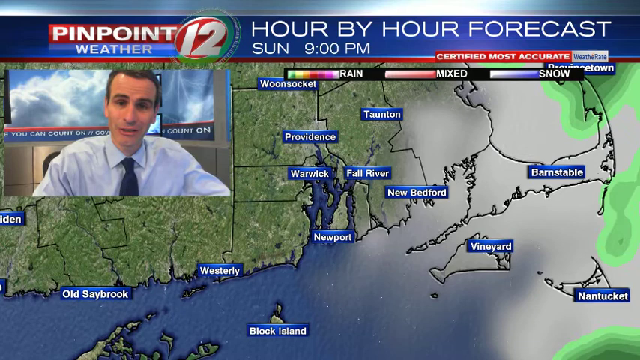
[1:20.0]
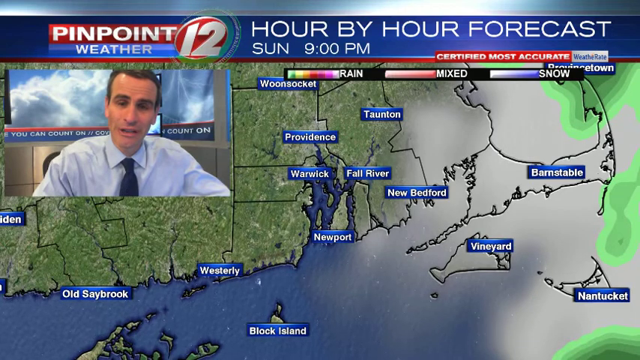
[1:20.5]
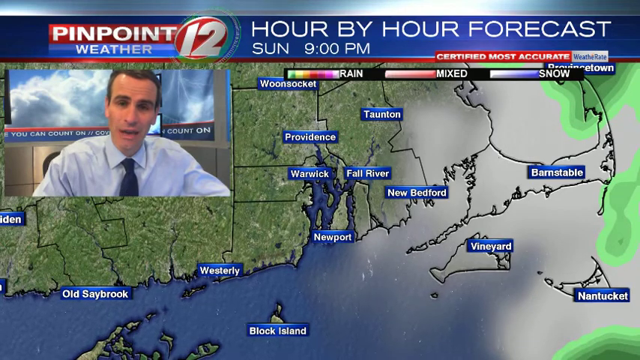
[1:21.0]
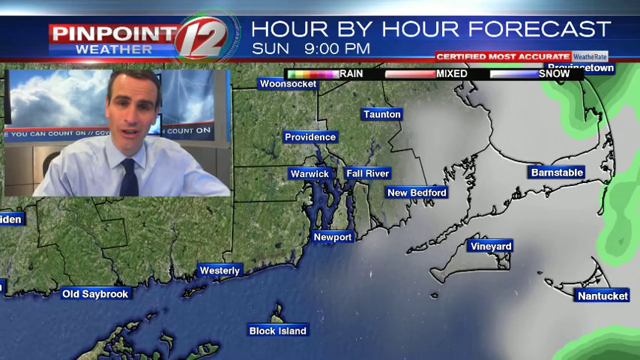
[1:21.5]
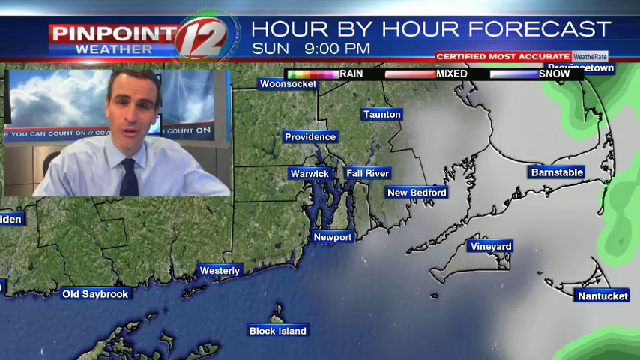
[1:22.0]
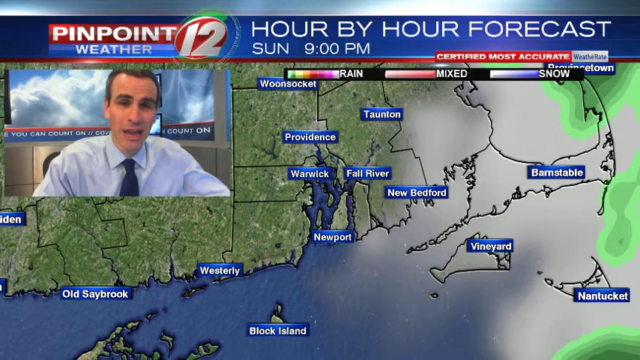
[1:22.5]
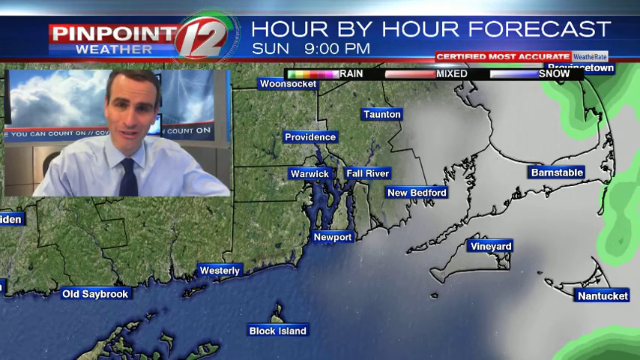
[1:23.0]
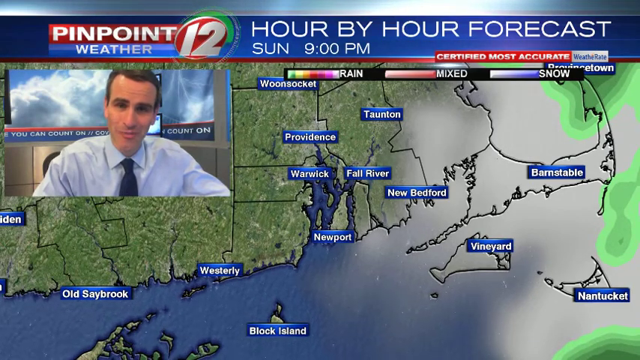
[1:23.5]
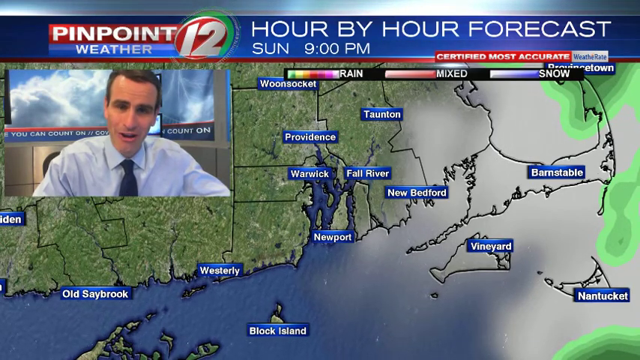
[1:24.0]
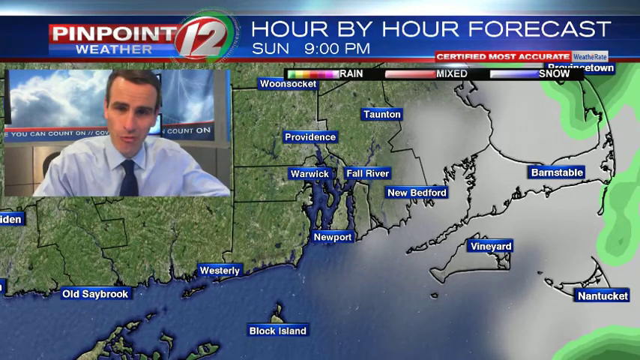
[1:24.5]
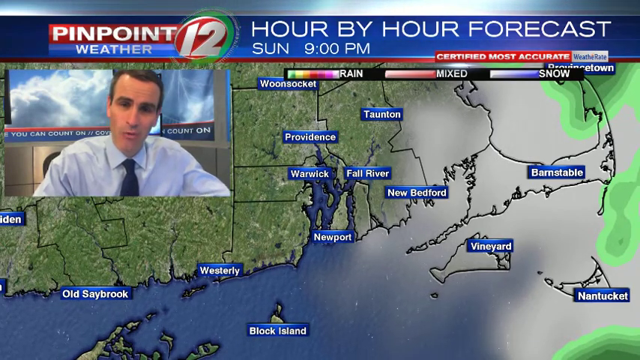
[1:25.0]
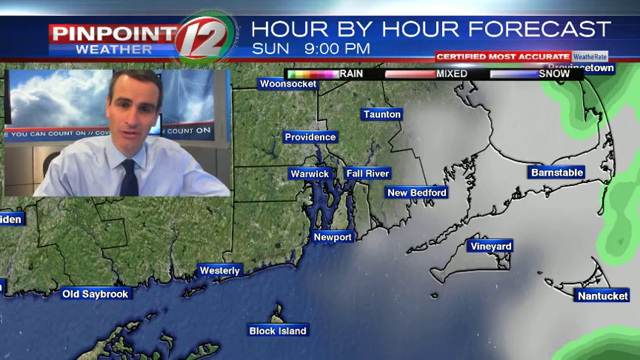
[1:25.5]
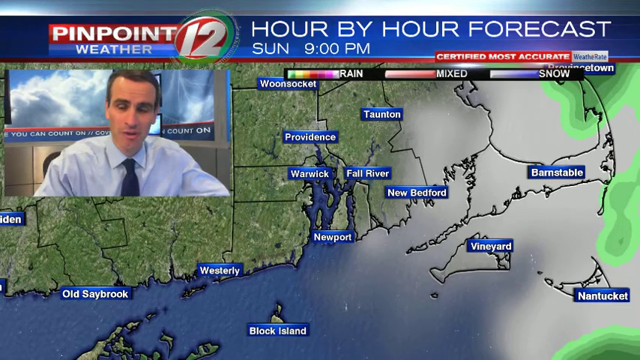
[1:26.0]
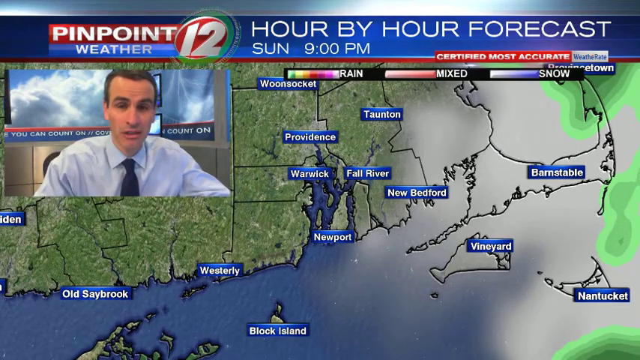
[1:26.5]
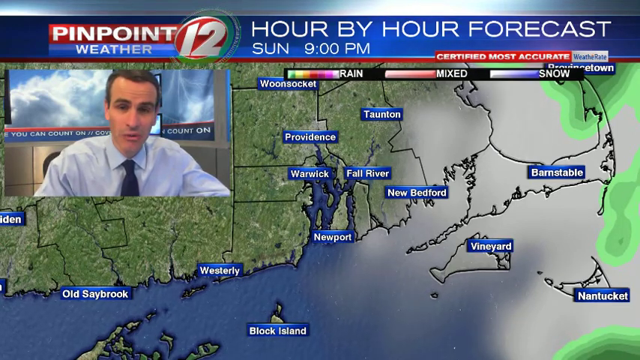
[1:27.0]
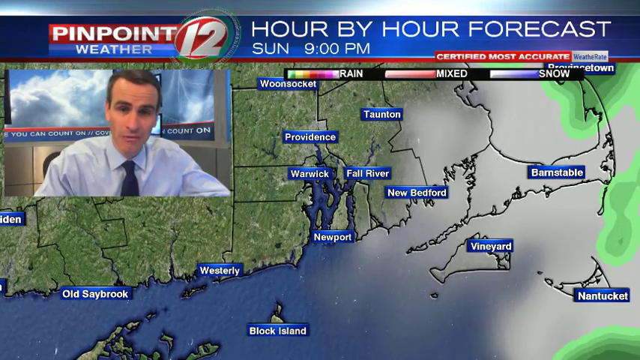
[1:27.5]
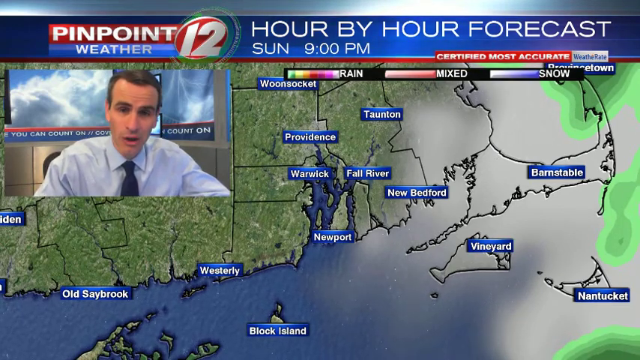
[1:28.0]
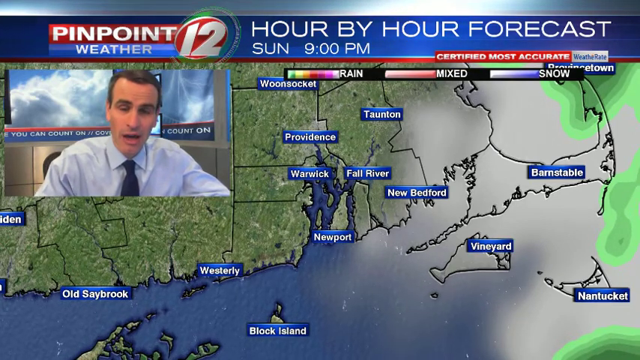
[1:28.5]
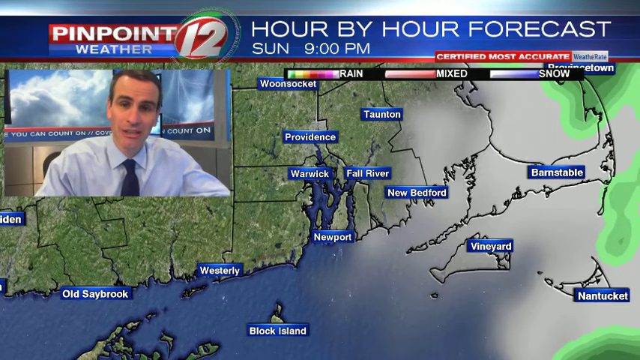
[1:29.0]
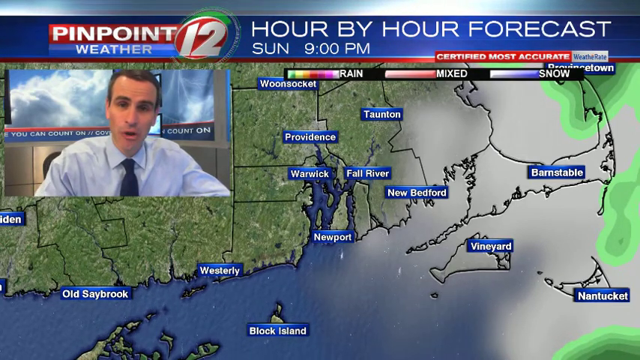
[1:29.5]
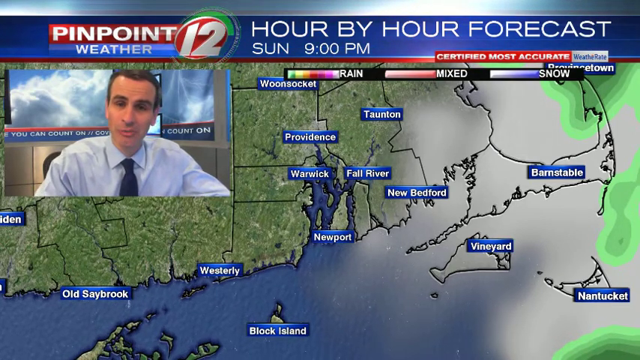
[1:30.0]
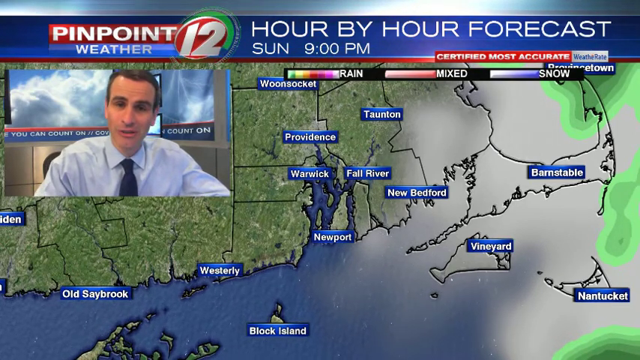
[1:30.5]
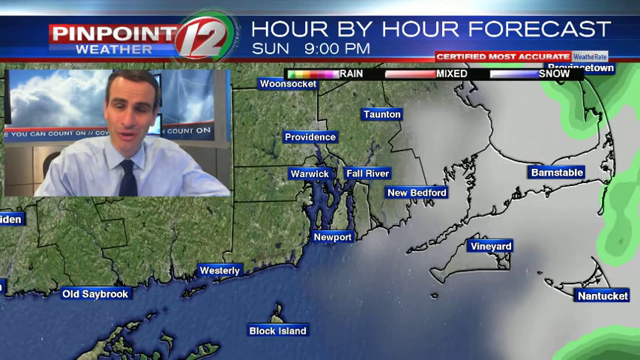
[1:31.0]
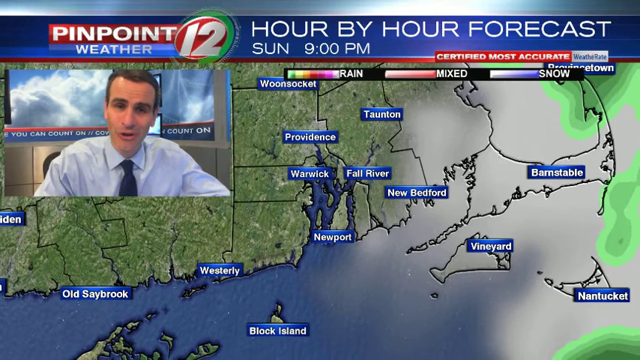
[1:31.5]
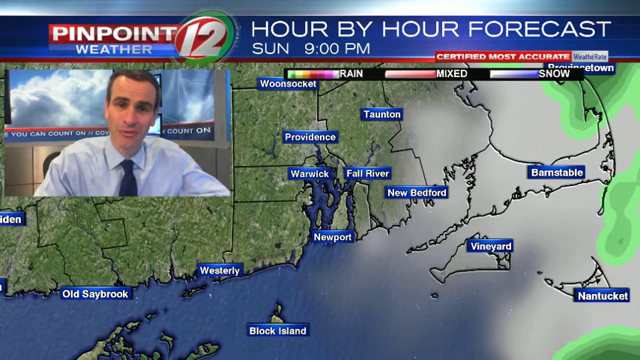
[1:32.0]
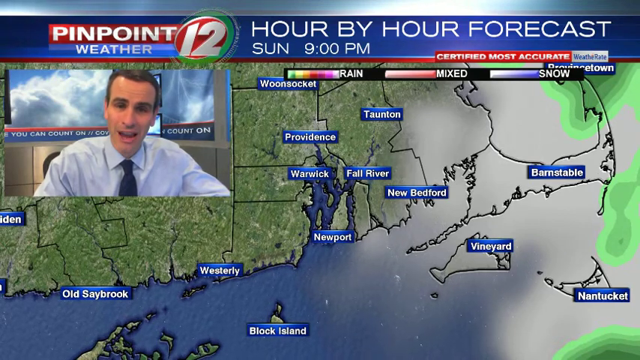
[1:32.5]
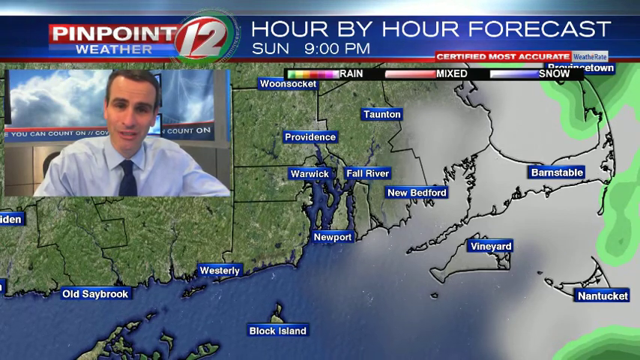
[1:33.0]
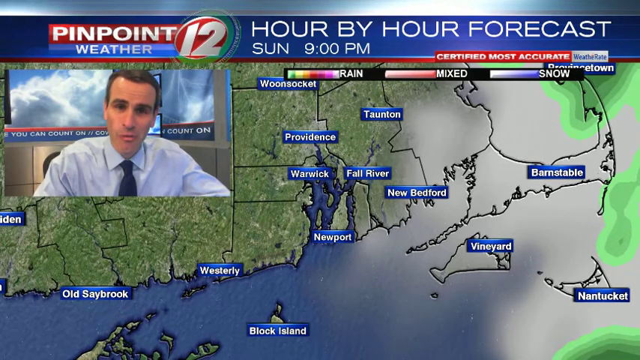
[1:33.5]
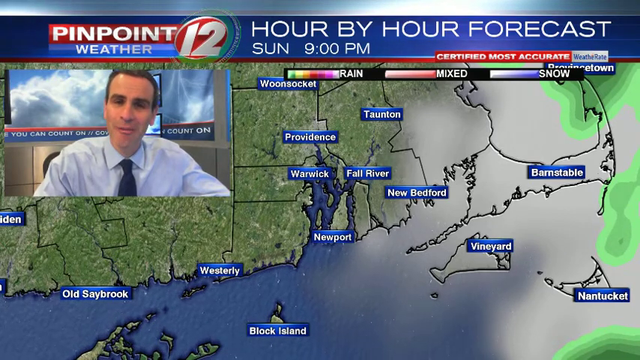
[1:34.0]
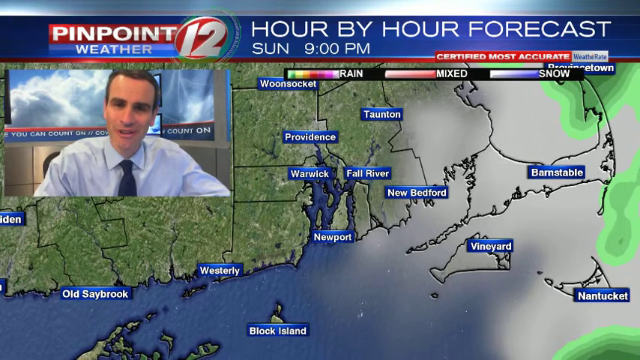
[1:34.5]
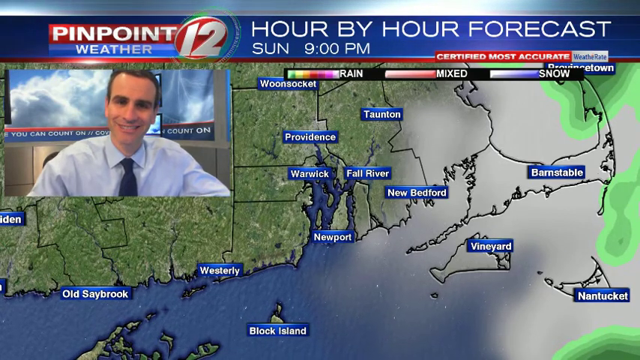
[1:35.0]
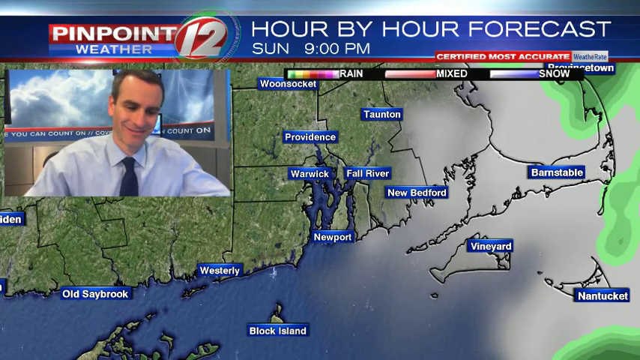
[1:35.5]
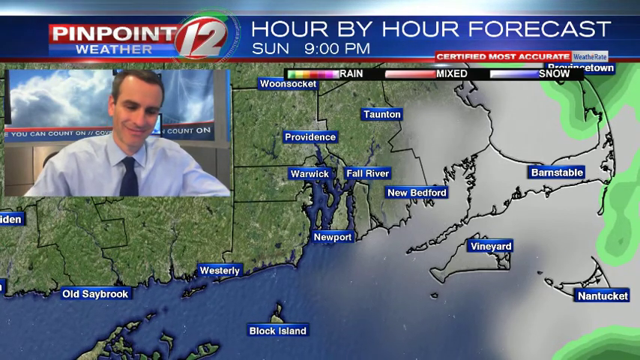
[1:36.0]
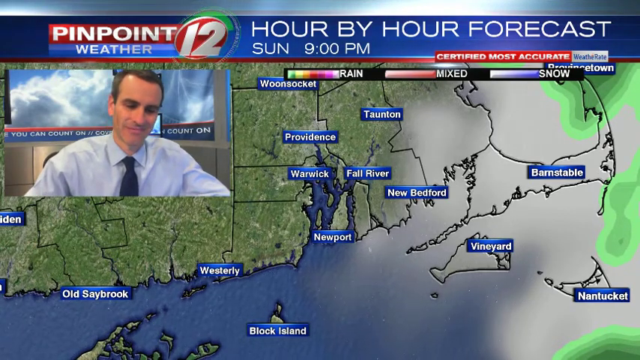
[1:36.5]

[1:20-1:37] The same man talks in front of the camera, seeming confident about what he is explaining on the map. The map shows Sunday 9 p.m., with only a small part on the far right in green, representing rain. At the top there is a scale of different types of rain with the colors green, yellow, orange, red, pink and white, with green first on the left.